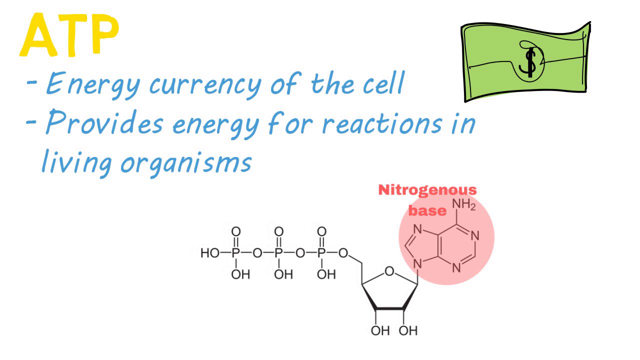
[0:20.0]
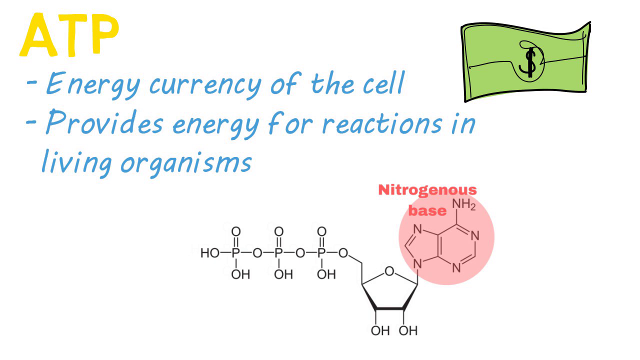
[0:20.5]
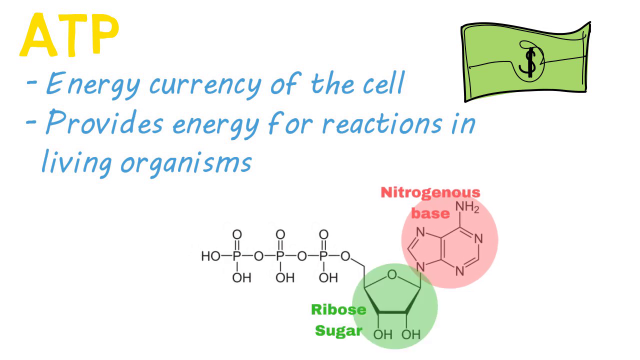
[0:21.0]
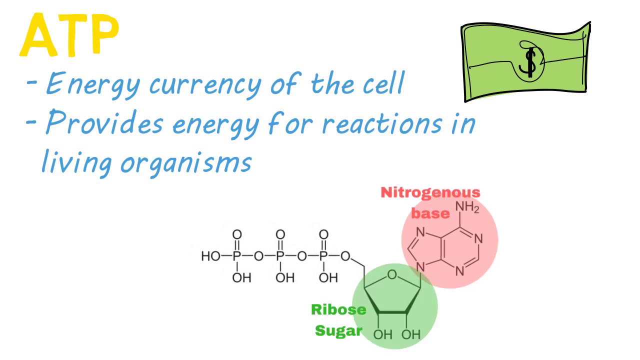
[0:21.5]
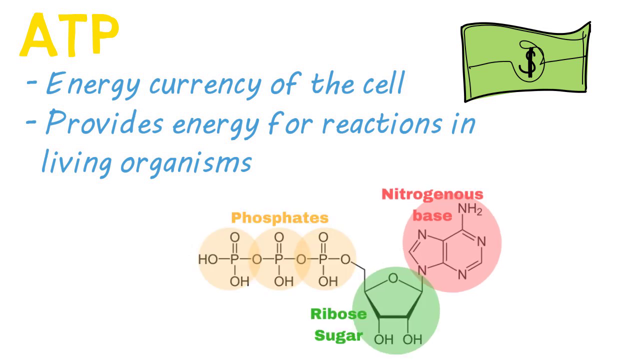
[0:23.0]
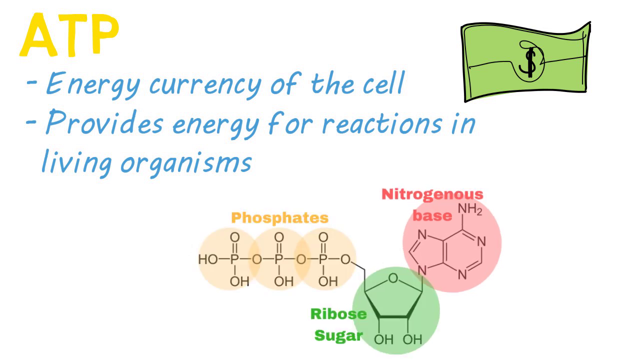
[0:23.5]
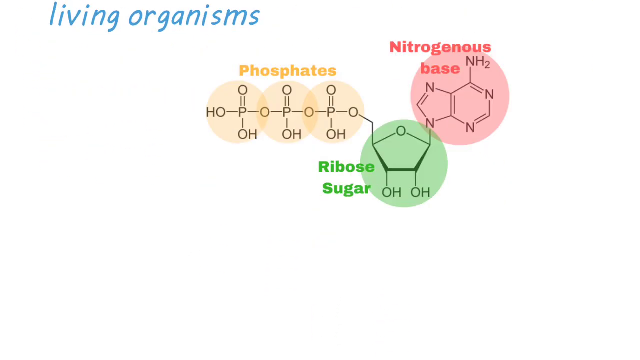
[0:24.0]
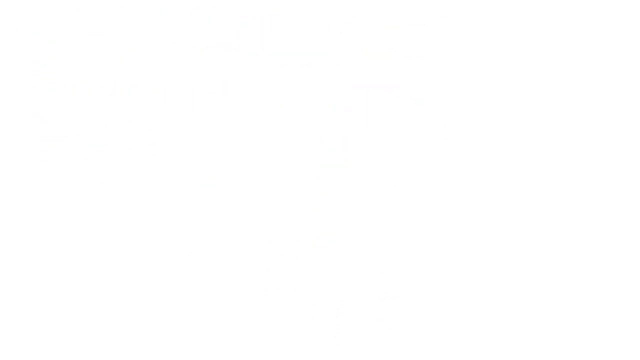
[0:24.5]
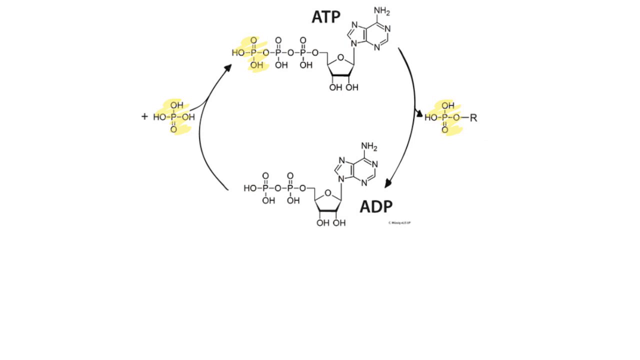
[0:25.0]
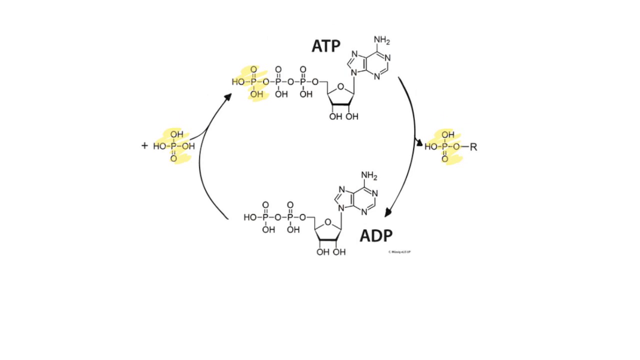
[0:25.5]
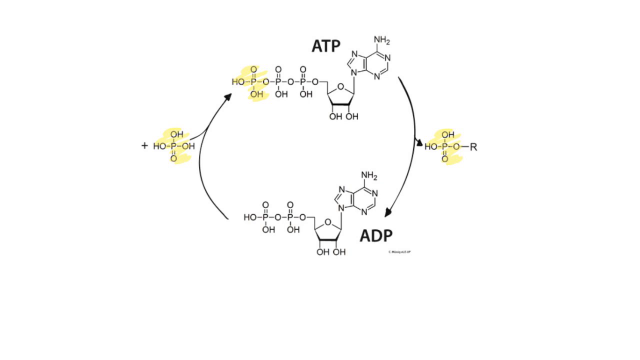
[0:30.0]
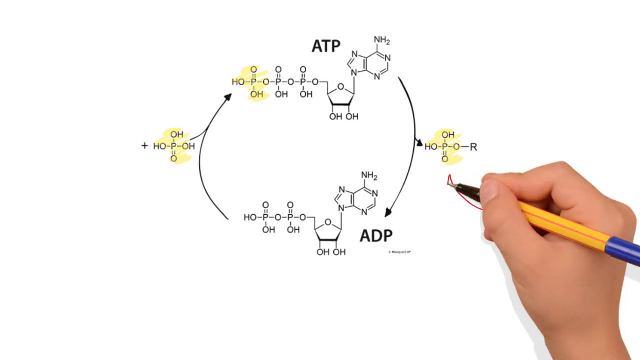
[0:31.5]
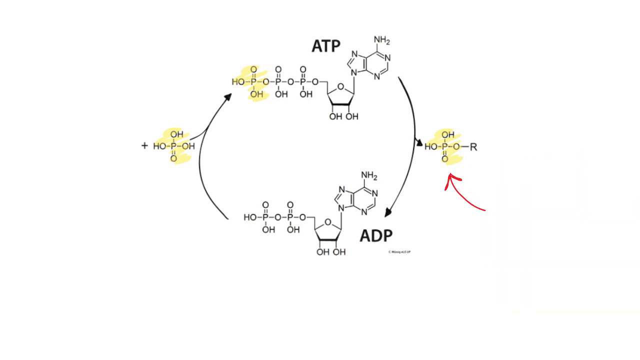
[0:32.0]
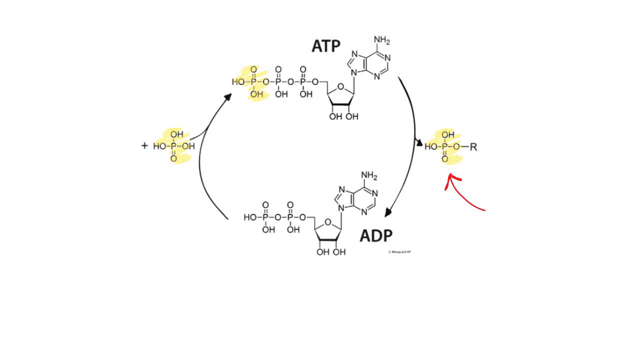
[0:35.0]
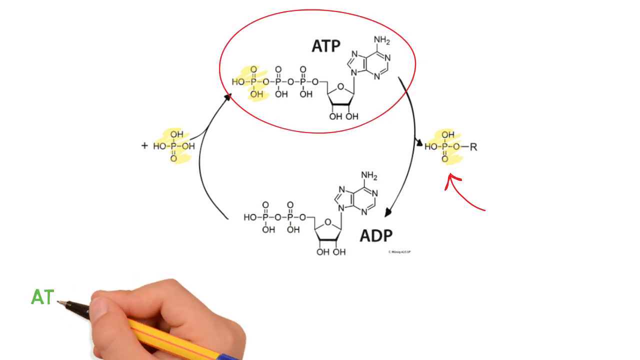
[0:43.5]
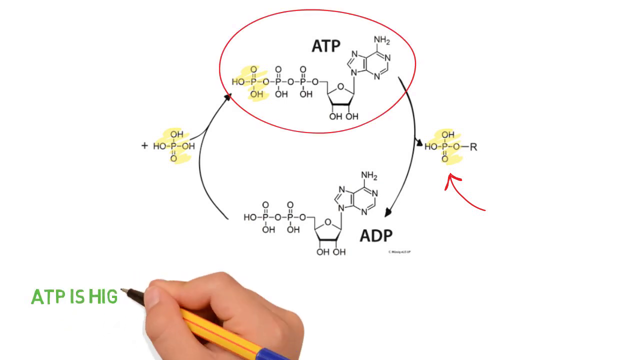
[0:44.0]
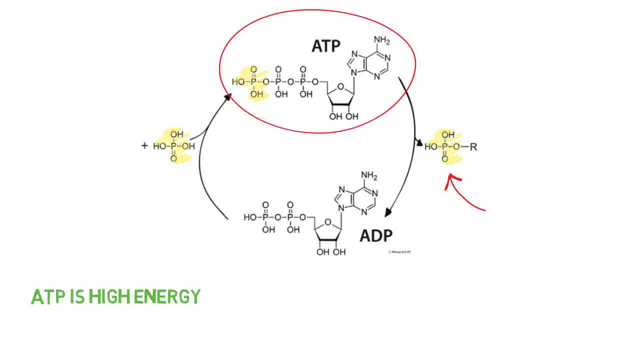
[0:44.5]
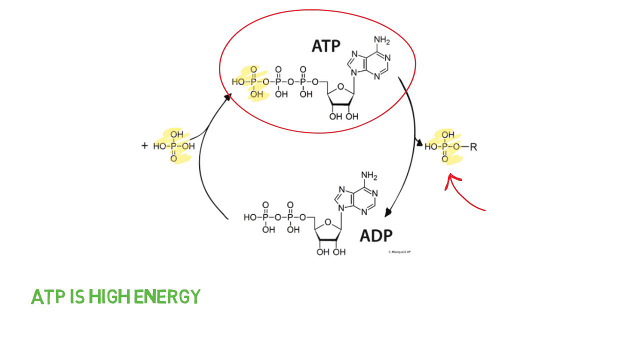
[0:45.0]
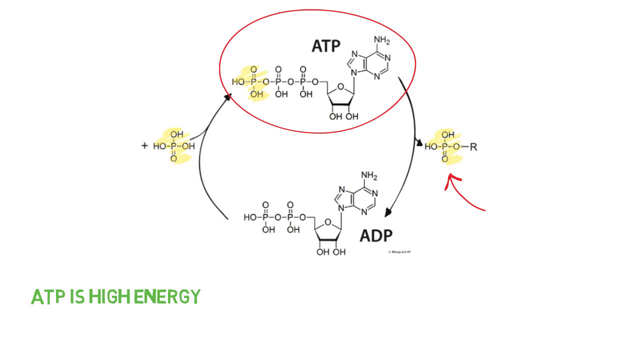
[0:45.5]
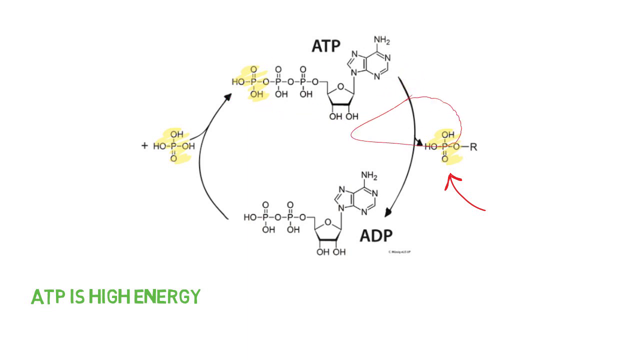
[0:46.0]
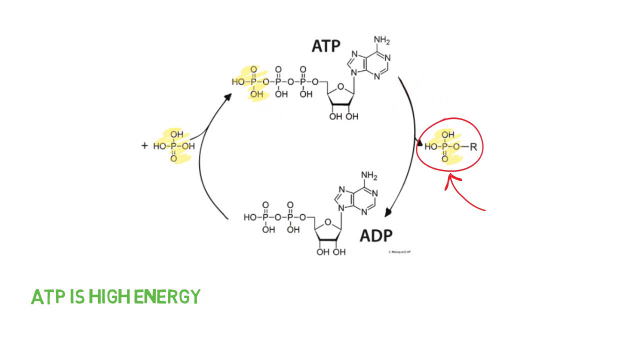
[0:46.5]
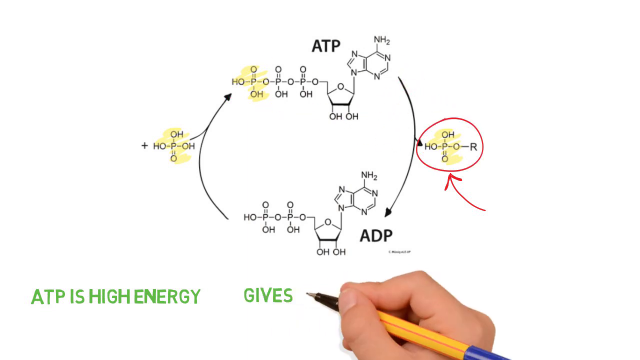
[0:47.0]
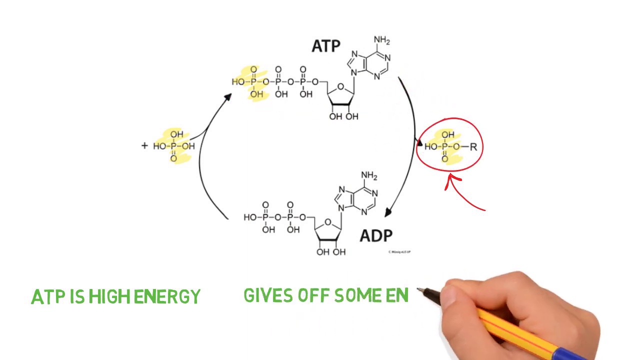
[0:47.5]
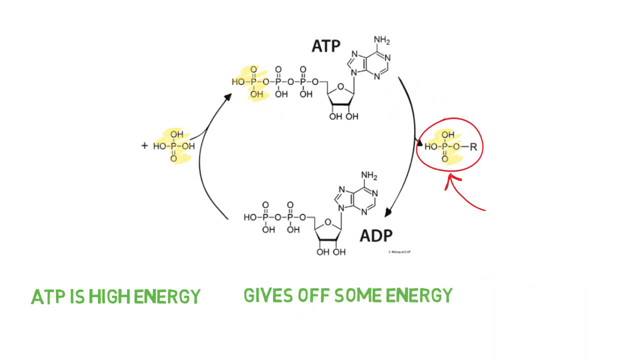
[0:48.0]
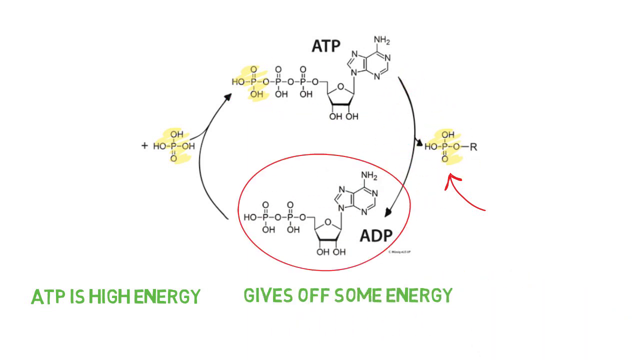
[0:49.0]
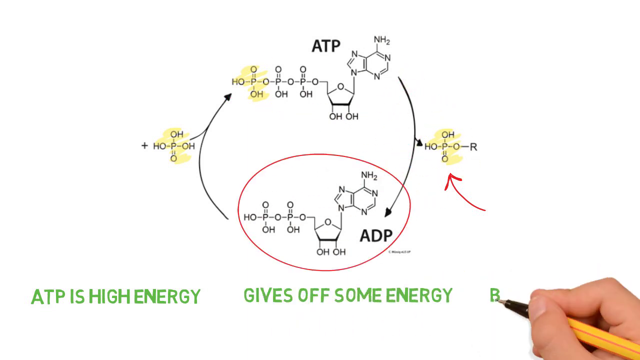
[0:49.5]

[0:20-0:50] Text is on the screen. In the upper left are the initials "ATP," and underneath are two bullet points reading "energy currency of the cell" and "provides energy for reactions in living organisms." In the upper right corner is a note that looks like a bank note, like a dollar bill: it is green with black lines on it and what appears to be a black dollar symbol in the middle. In the bottom part of the screen there are some biological markers or data showing some type of cell, a nitrogenous base. The video then shows more cells on the next page: the one on the top is titled "ATP" and the one on the bottom is titled "ADP." Black arrows go around them in a clockwise circular motion. Toward the end, a red line with an arrow at its end points to the cell at the right center of the screen. Finally, the person writes words at the bottom of the screen: "ATP is high energy" and "gives off some energy."